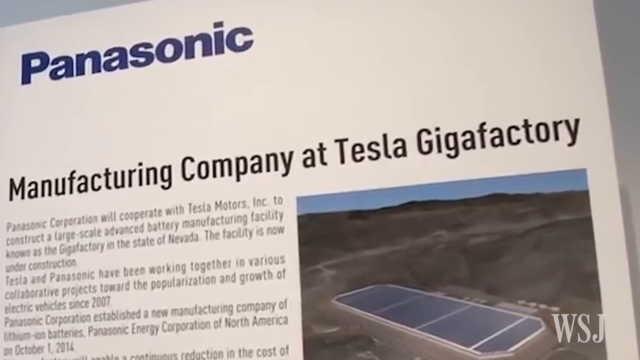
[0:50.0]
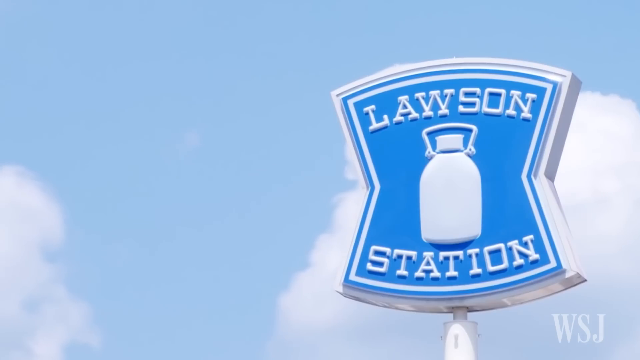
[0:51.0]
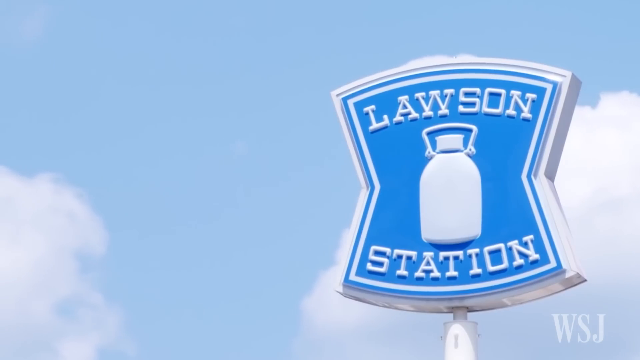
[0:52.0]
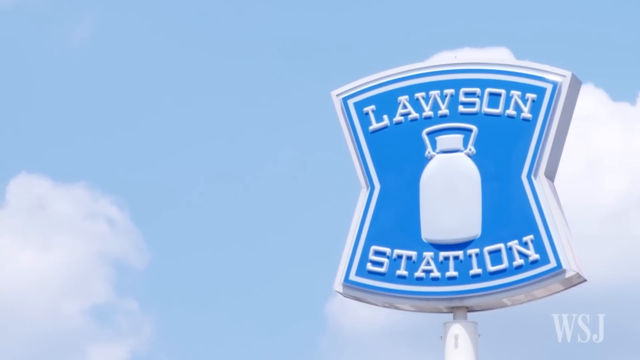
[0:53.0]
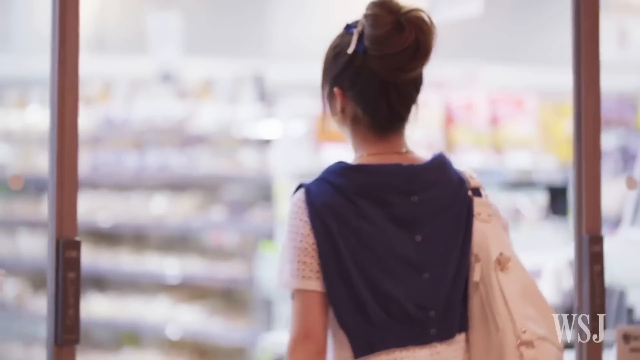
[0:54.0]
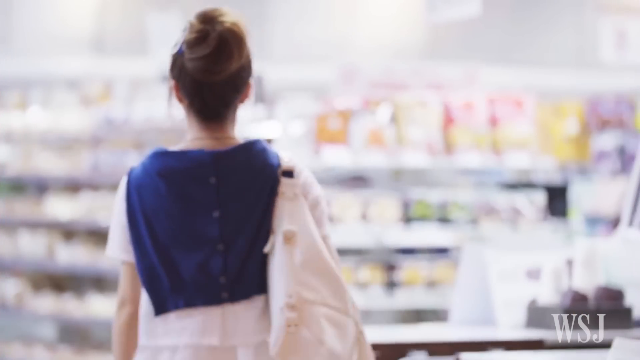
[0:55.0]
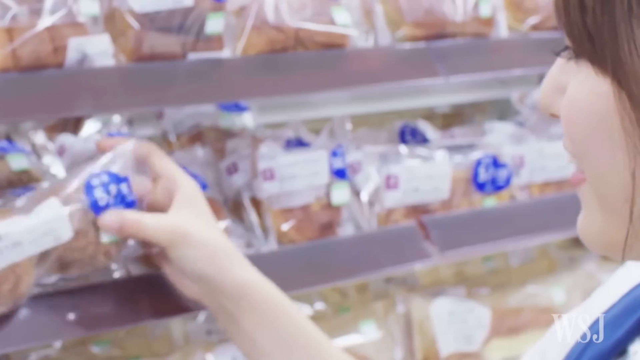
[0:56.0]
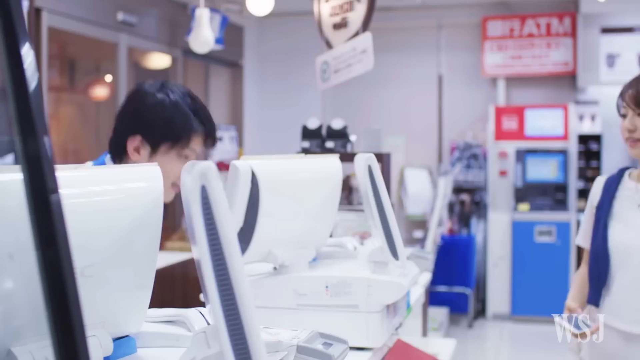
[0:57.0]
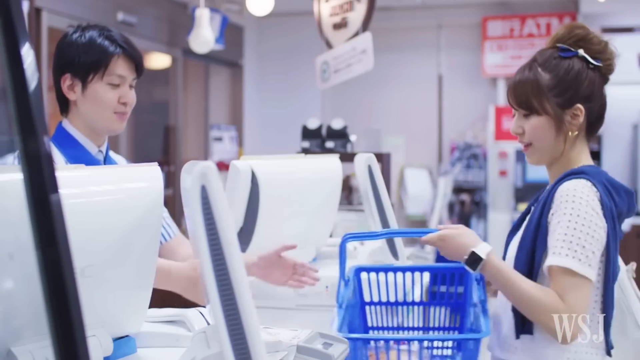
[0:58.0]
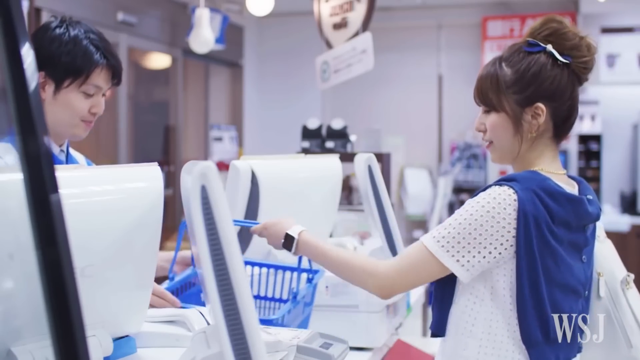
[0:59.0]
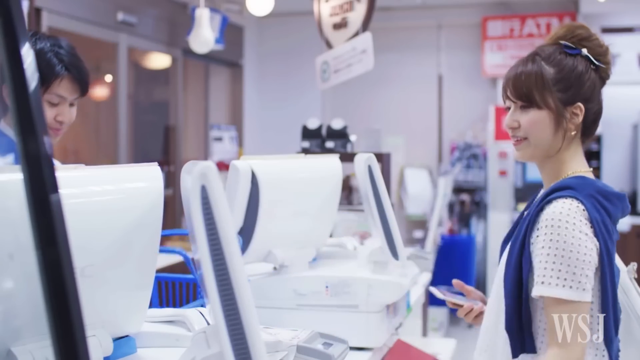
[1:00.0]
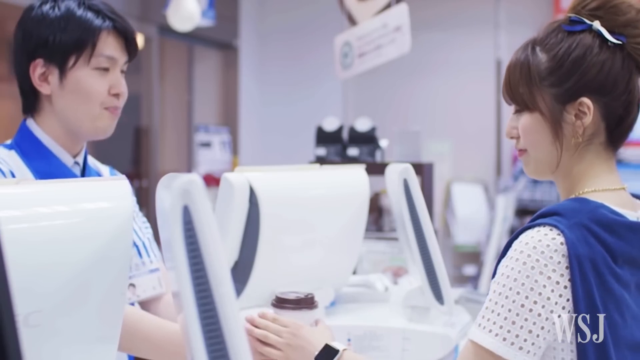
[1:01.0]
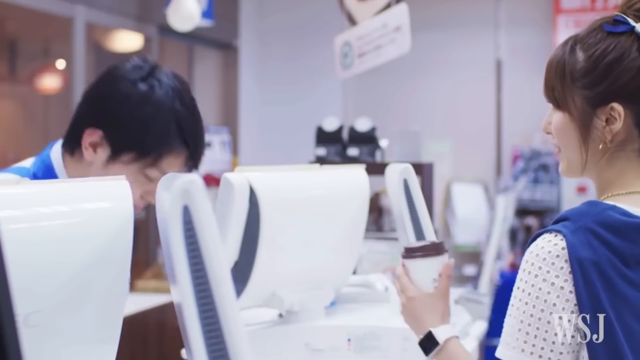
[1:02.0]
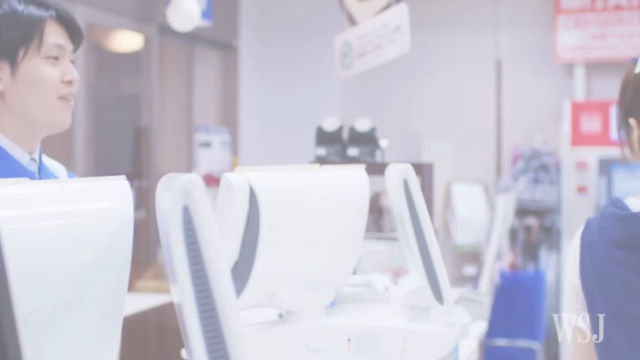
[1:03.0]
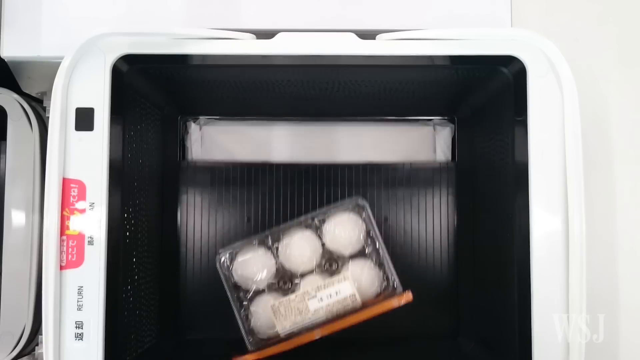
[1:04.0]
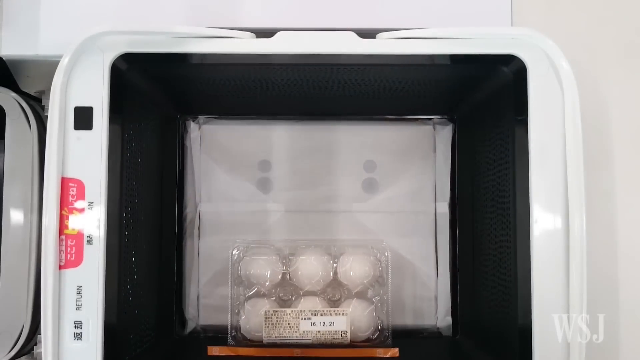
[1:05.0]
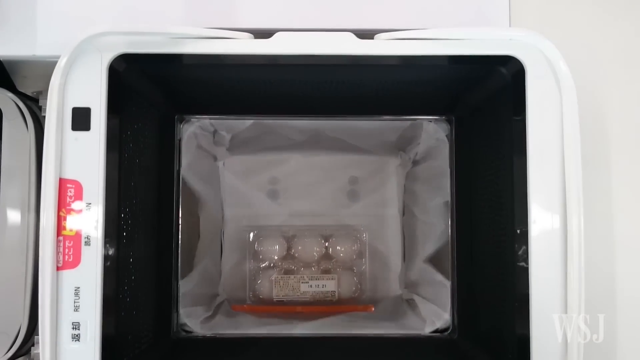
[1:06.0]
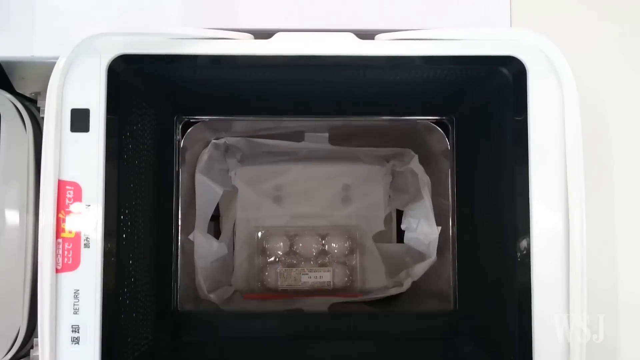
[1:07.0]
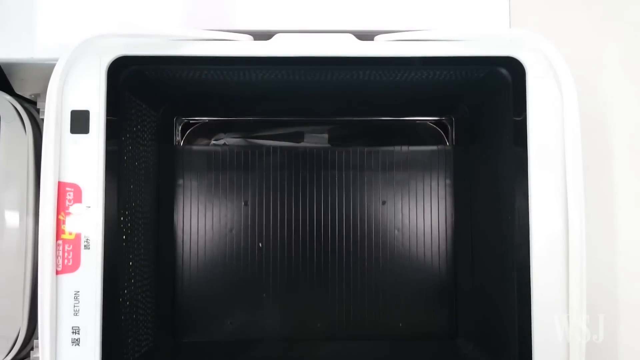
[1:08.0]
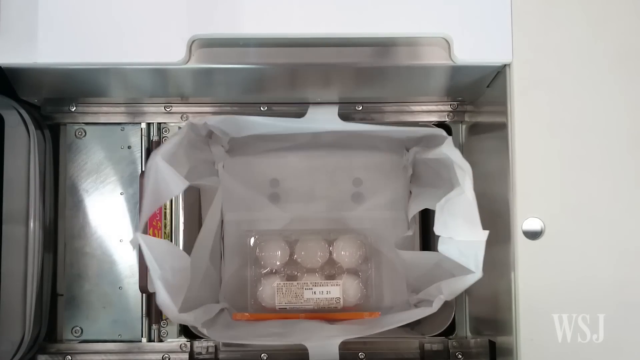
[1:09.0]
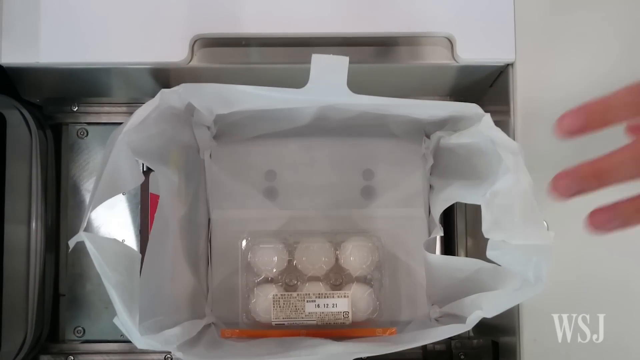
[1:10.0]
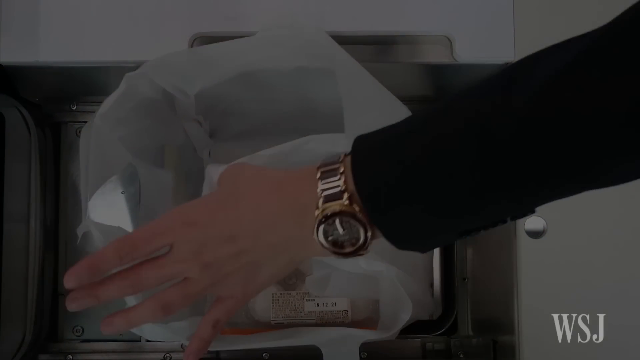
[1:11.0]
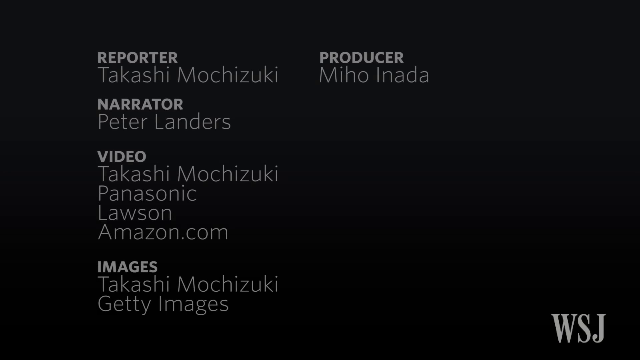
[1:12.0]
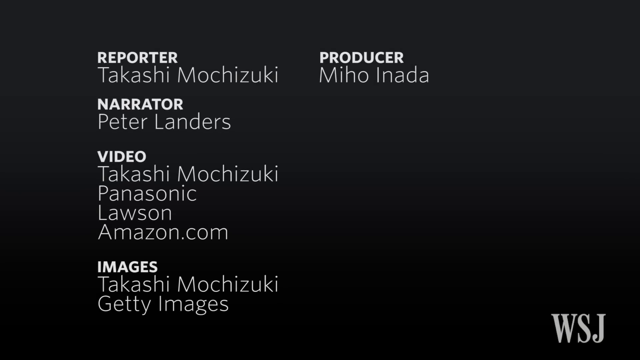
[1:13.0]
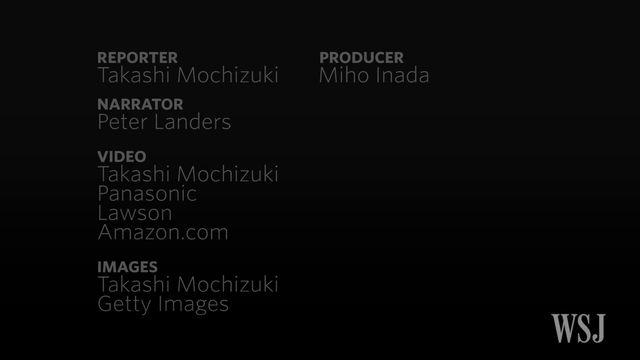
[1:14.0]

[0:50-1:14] Clouds move across a blue sky in the background. A picture shows a sign outside a business reading "Lawson Station" in white on a blue background. The next scene shows the back of a lady with her hair in a bun and a sweater tied over her shoulders, walking out through a glass door that opens in the middle. A woman, seen in profile, grabs an item packaged in plastic from a shelf. She puts her blue basket on the counter, and a man who works there, across from her and wearing a blue apron, grabs the basket. She holds a phone in her right hand, and he hands her a cup of warm coffee. A top view looks into a basket of items as a bag comes up and takes the items from the basket and the basket moves away. The bag pops up and a hand grabs it.